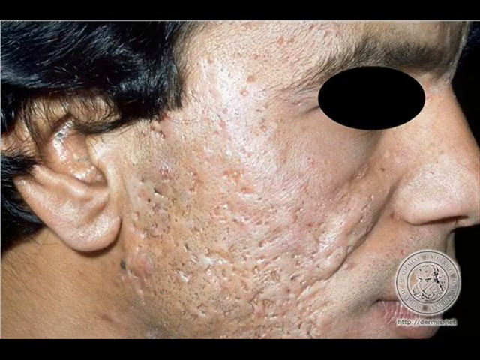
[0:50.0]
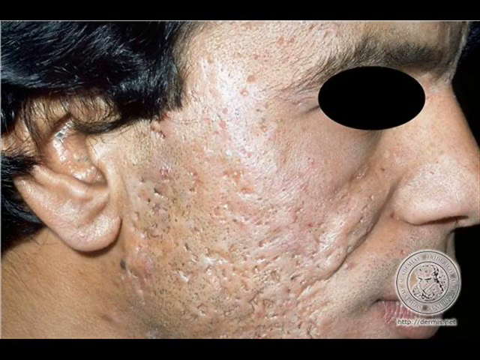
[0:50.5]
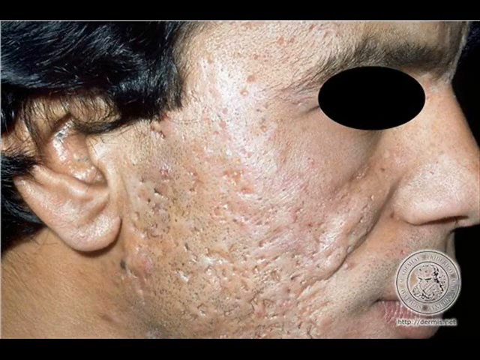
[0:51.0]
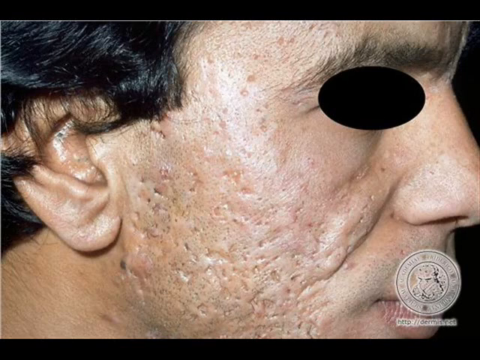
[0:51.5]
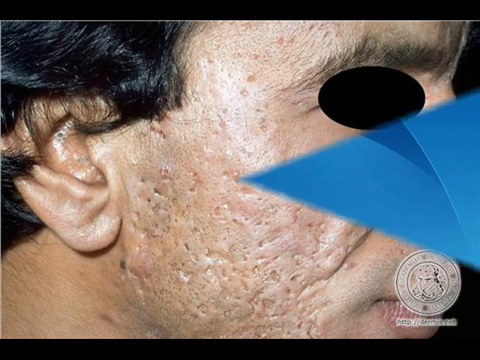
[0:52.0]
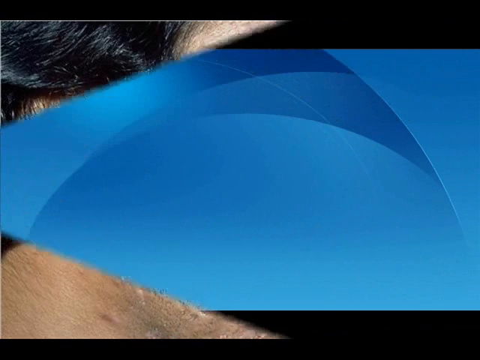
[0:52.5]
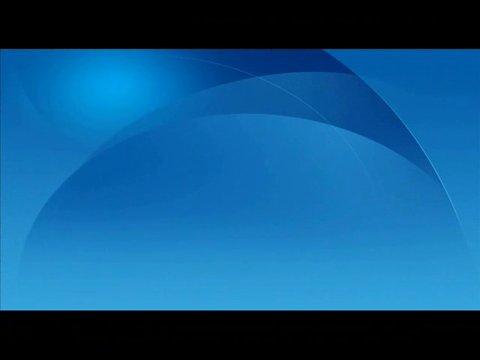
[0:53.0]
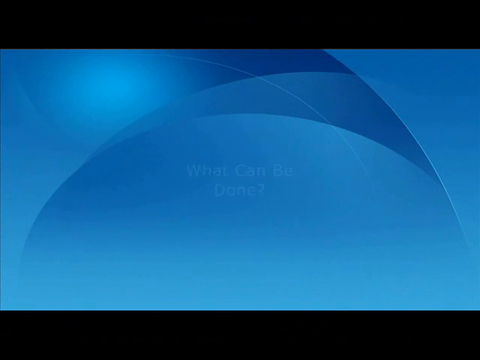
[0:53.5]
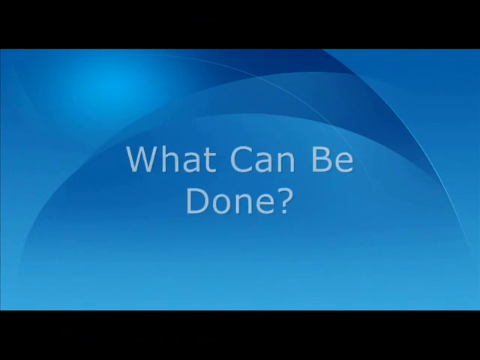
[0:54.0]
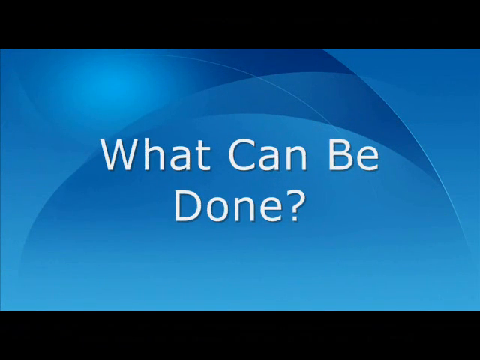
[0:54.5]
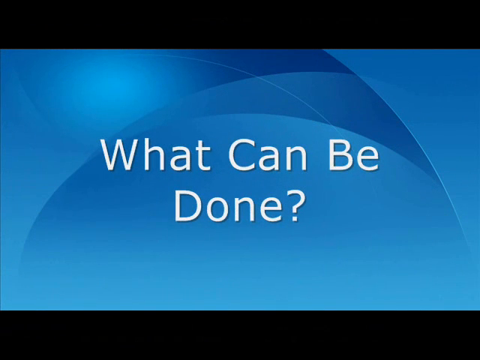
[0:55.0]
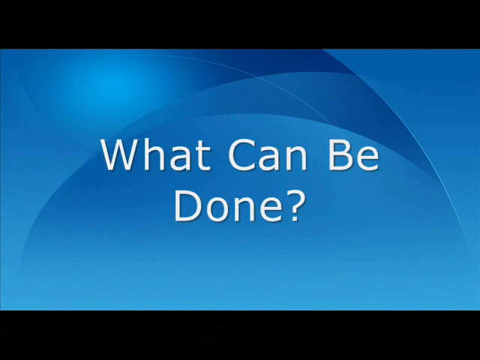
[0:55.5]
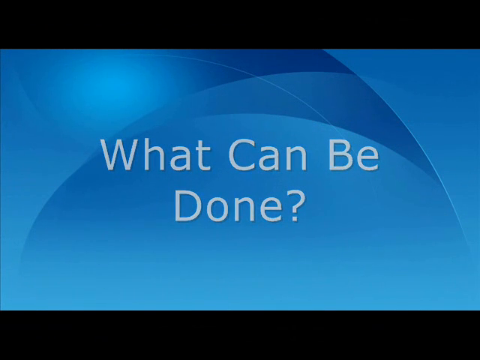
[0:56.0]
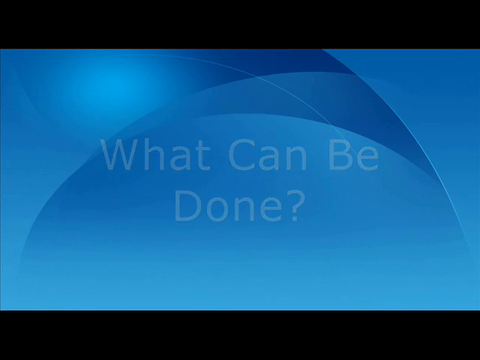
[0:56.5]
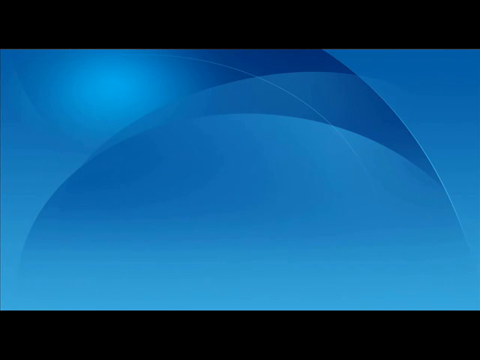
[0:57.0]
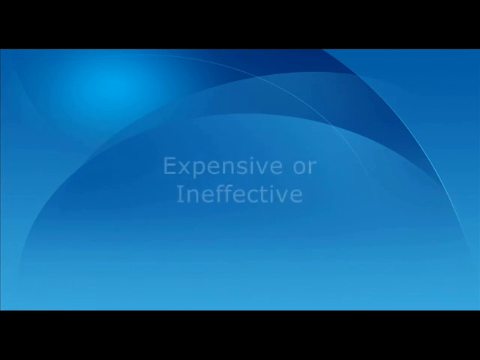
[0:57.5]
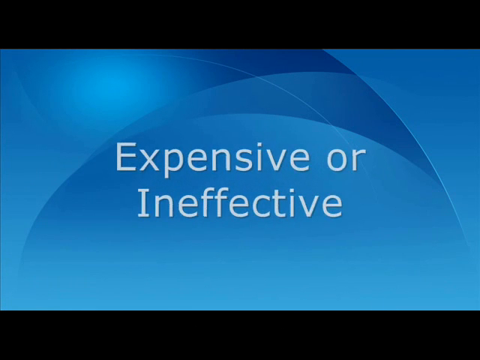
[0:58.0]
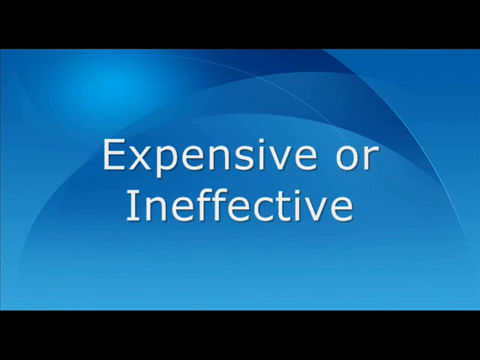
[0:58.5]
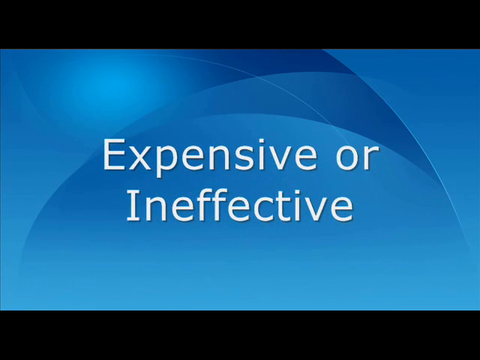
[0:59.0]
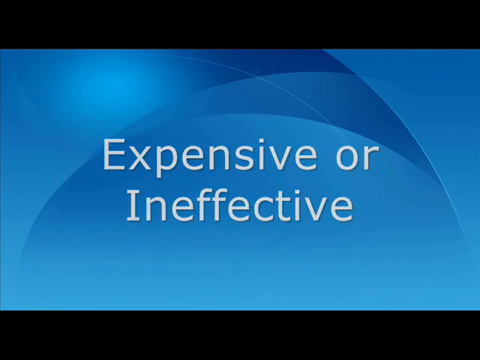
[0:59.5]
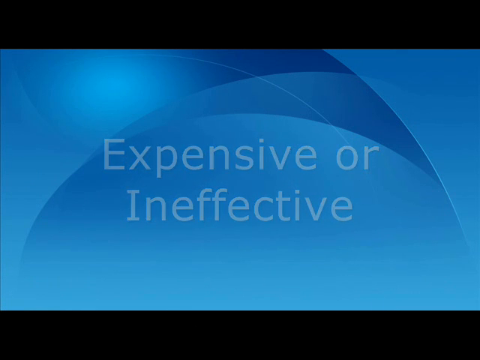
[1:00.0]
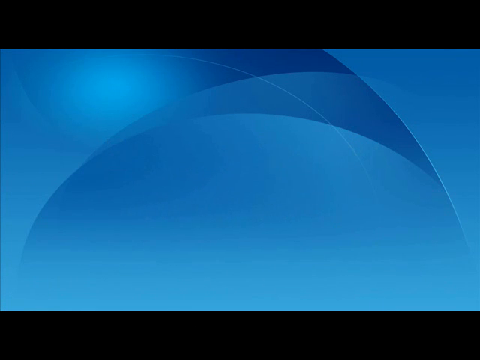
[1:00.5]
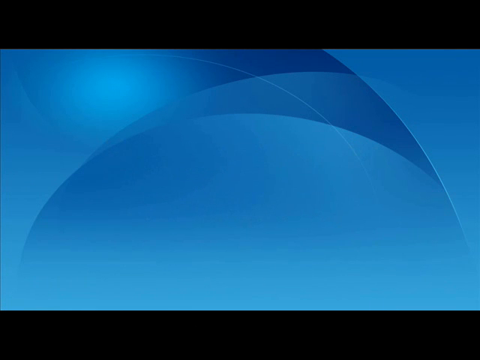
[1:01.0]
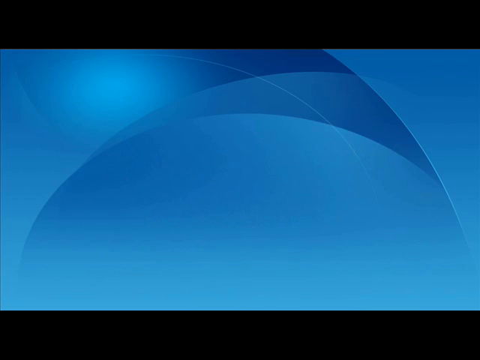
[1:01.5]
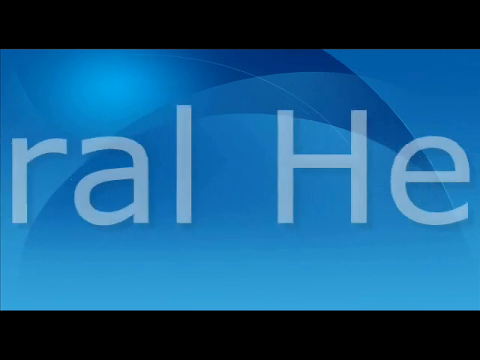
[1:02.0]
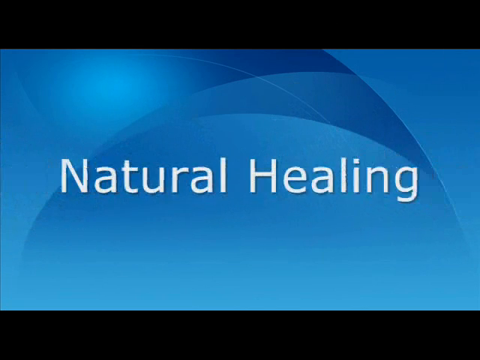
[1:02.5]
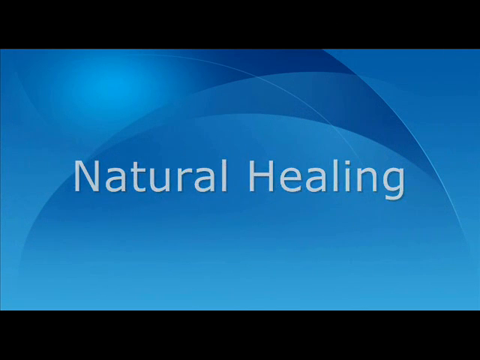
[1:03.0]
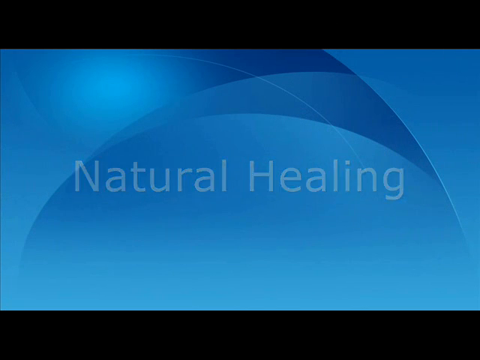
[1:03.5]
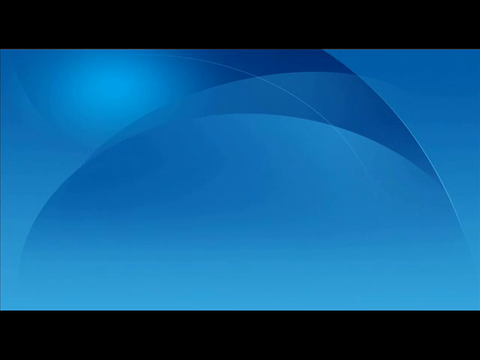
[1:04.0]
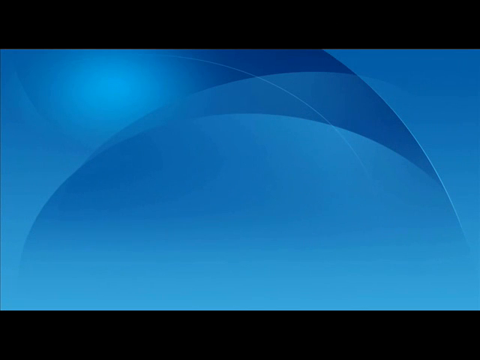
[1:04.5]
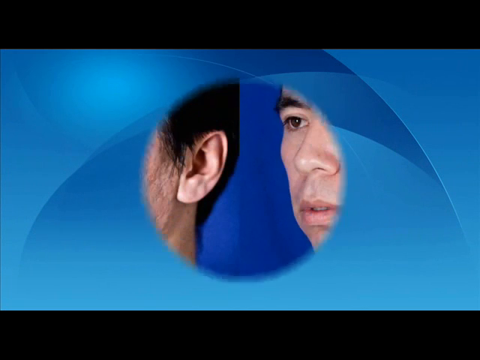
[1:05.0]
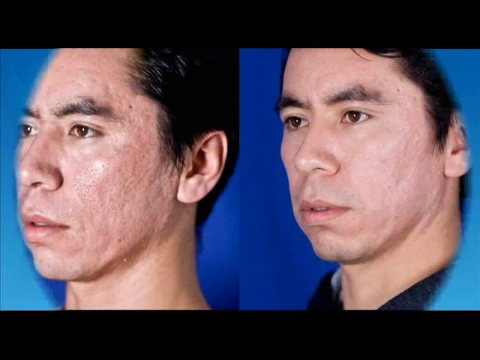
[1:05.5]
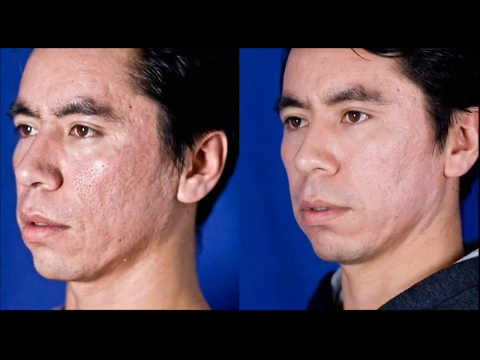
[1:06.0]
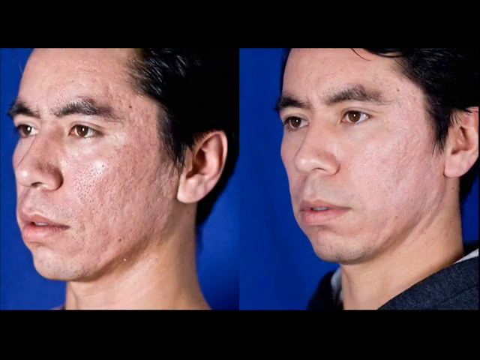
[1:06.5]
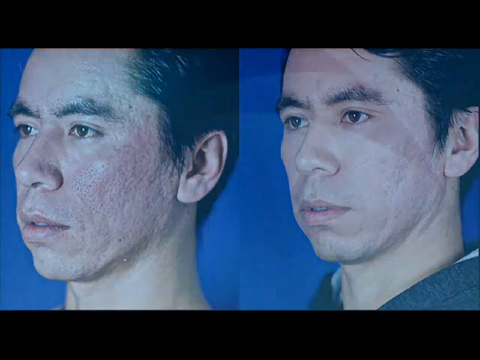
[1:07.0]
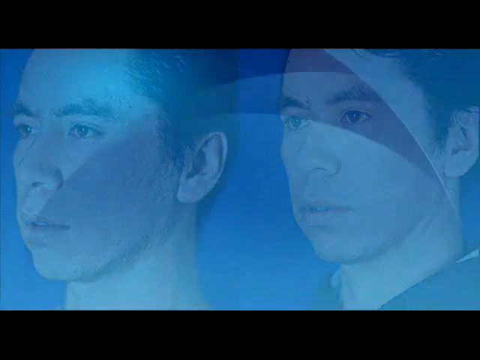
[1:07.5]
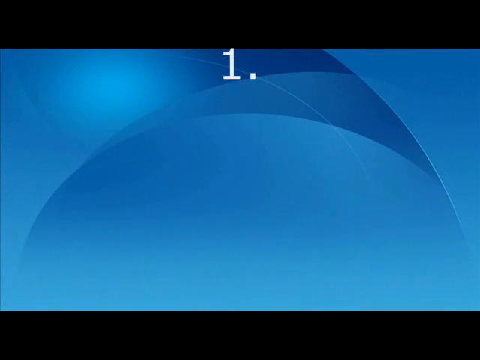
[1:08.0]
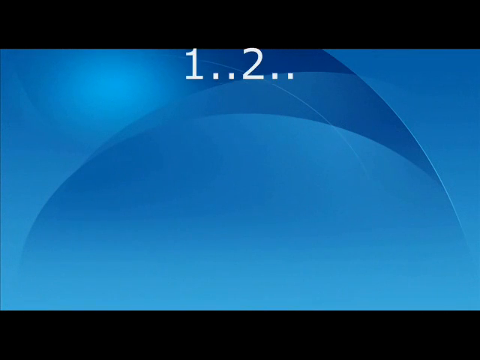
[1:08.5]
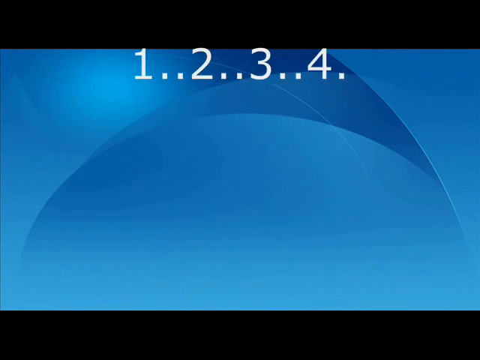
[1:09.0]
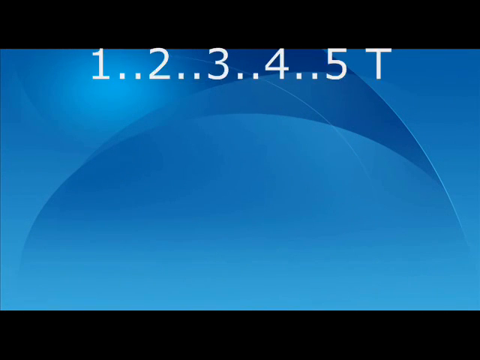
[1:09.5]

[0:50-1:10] A photograph shows the right side of a person's face. The photo is heavily zoomed in, so the top half and his neck and bottom chin are cut out of the image. Behind him is a solid black background, and a black oval is placed over his eye to protect his identity. His cheek and ear are covered with various blackheads and acne, as well as pit marks and scarring. There is a blurred watermark in the bottom right corner. The screen transitions from right to left to a blue background, where white text appears reading "What can be done?" The text disappears, and new text appears reading "Expensive or ineffective?" That text disappears, and new text transitions in reading "Natural healing." A circle transition then leads to a before-and-after photograph of a man. He is facing the left and wears different clothing in each picture. On the left, his face is heavily scarred from acne and covered with pock marks; on the right, much of the scarring has smoothed out.